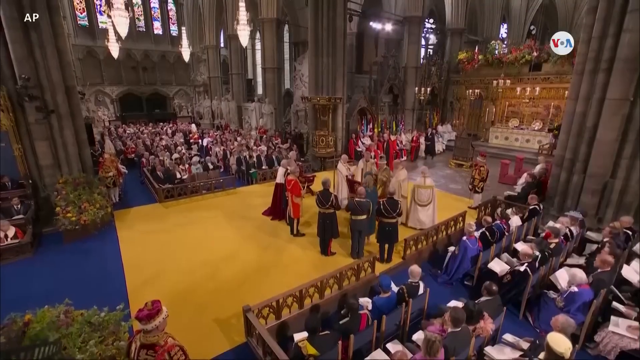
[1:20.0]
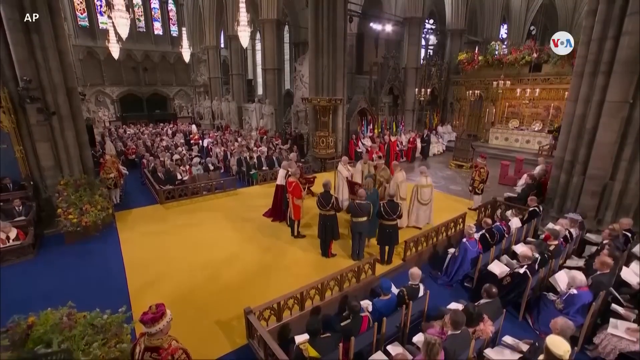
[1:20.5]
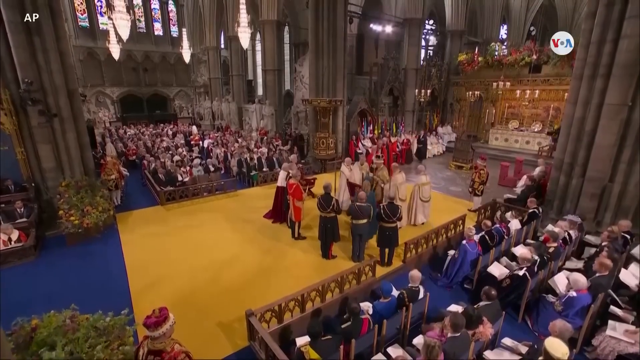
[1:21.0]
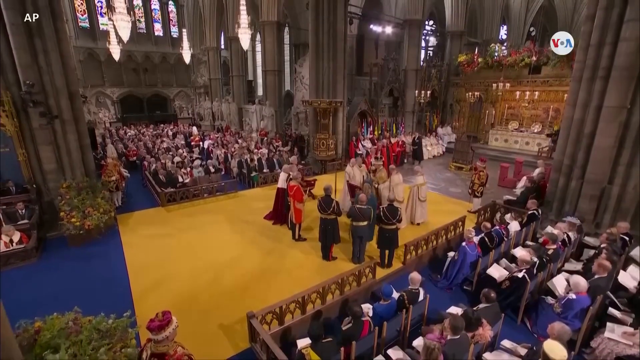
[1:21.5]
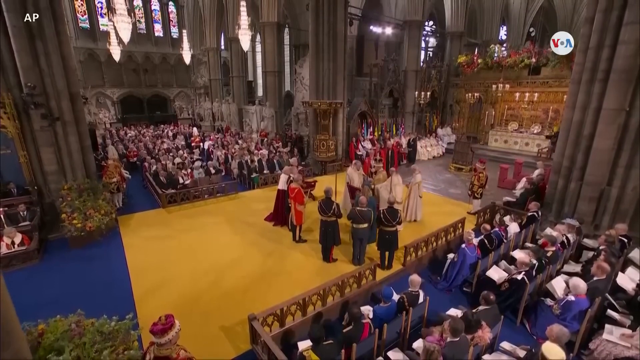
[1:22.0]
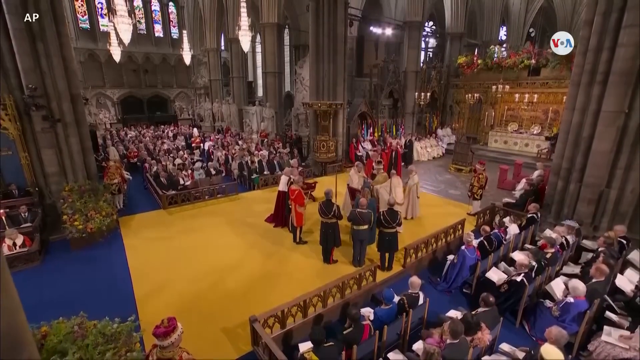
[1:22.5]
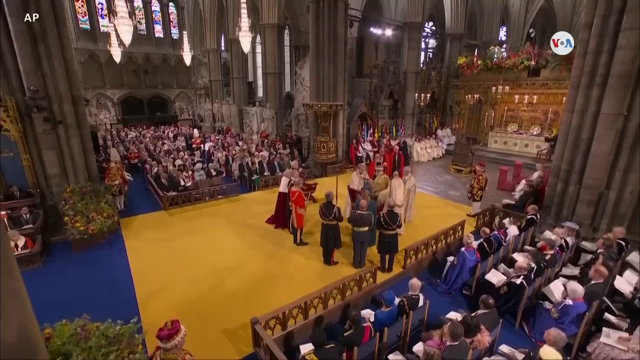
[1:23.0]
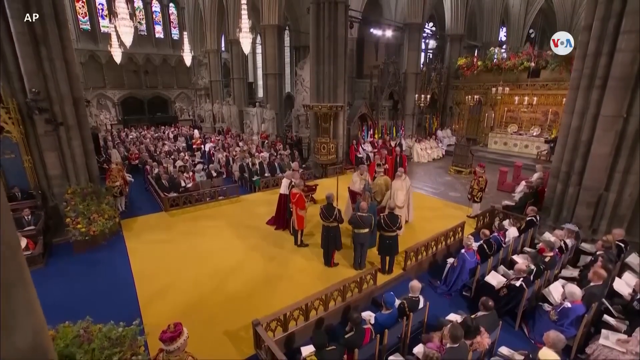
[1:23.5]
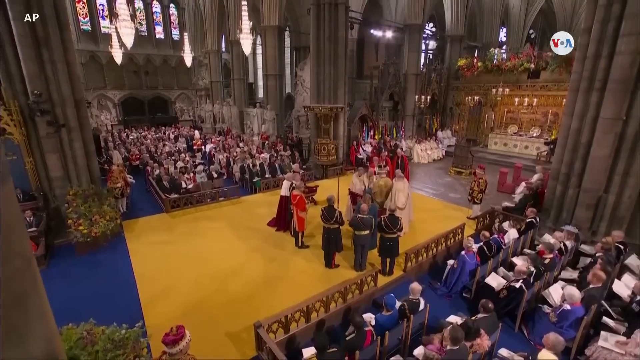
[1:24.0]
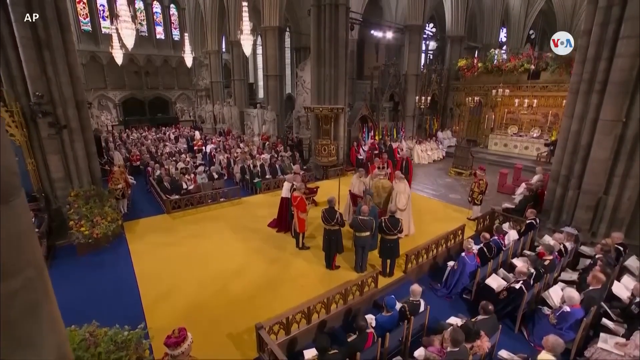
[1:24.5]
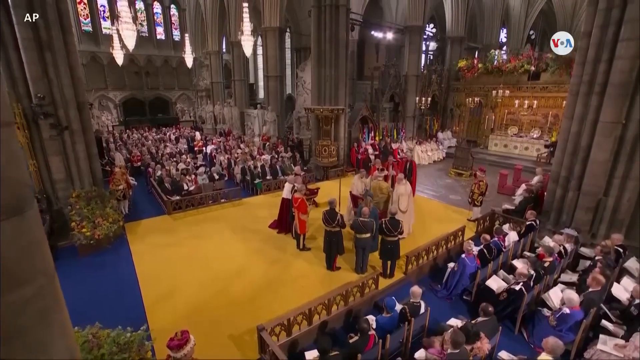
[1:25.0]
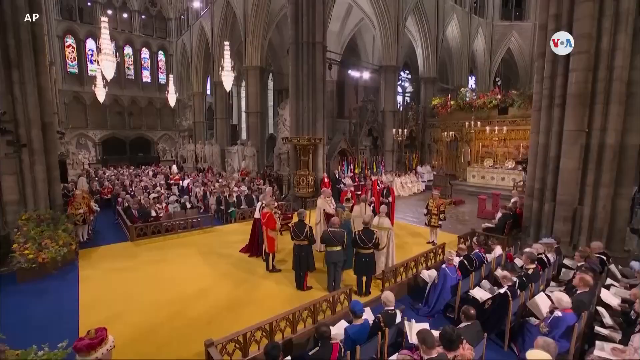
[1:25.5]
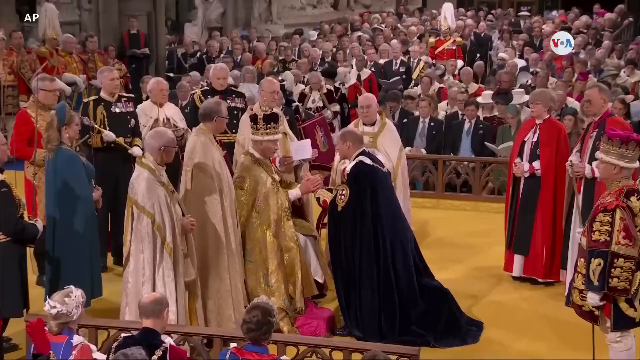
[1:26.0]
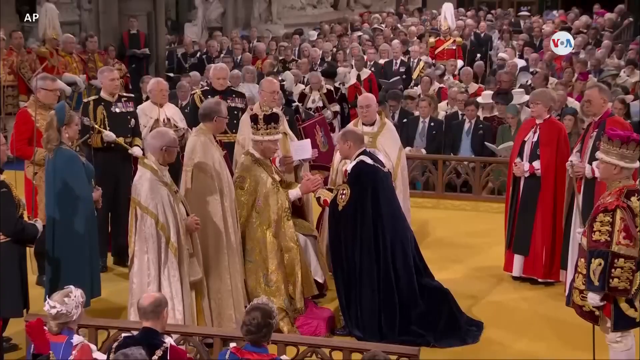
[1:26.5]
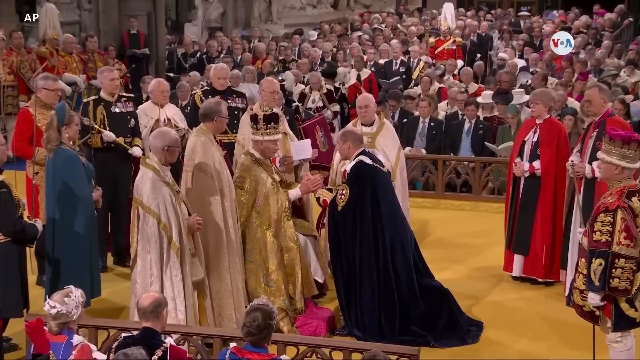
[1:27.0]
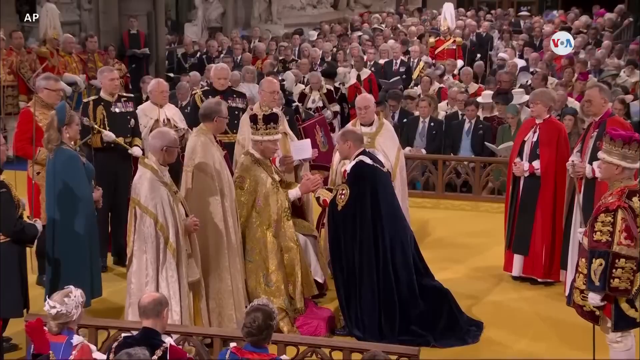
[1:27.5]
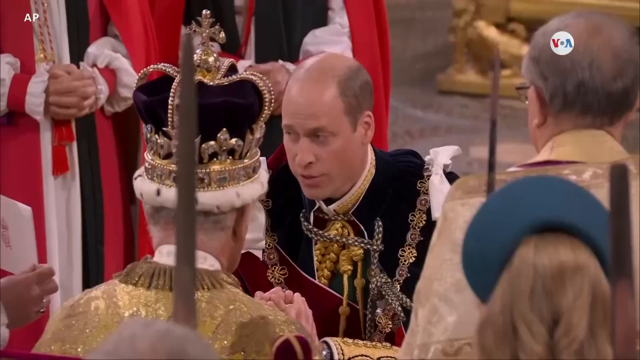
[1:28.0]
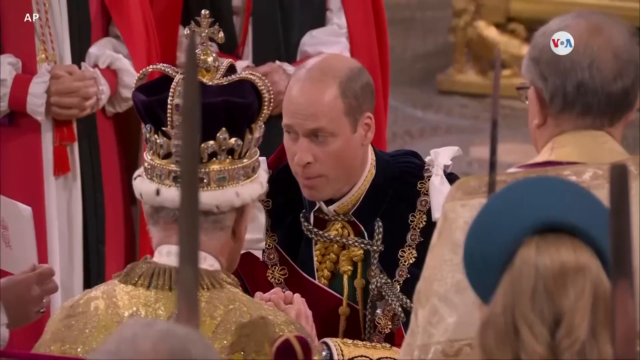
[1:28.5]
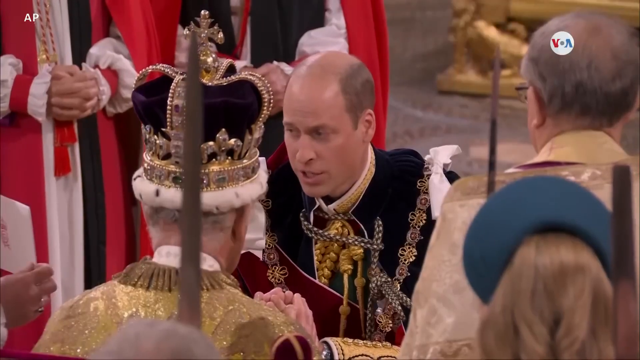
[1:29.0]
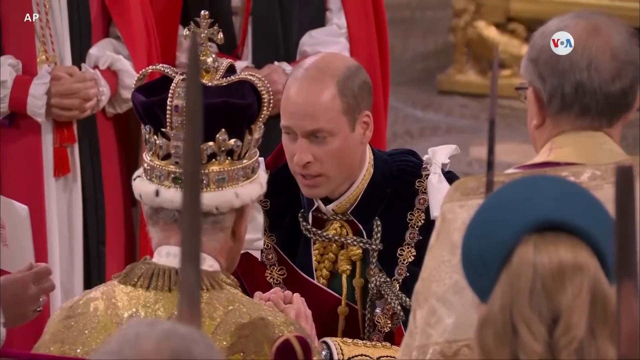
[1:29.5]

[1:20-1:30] A medium long shot shows figures standing in the centre of the hall on a yellow carpet. There is movement around King Charles, who can just about be made out in the centre of the scene, flanked by people in cloaks and people in other uniforms, perhaps military. He stands at the centre, and kneeling before him is his son, William, in a navy blue jacket-type garment with what looks like a wheat-yellow design where a tie would be. They appear to be reciting words to each other, perhaps some sort of traditional oath.